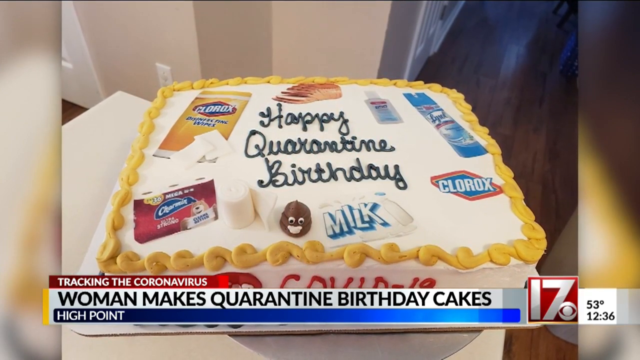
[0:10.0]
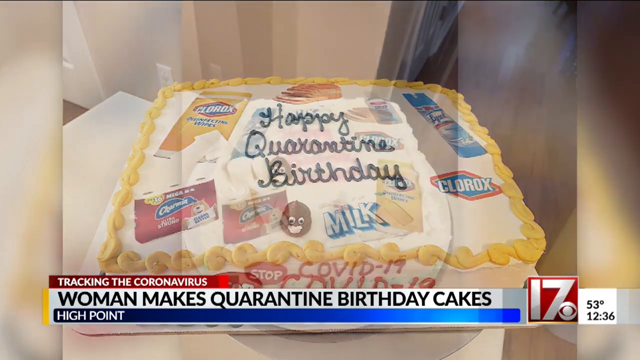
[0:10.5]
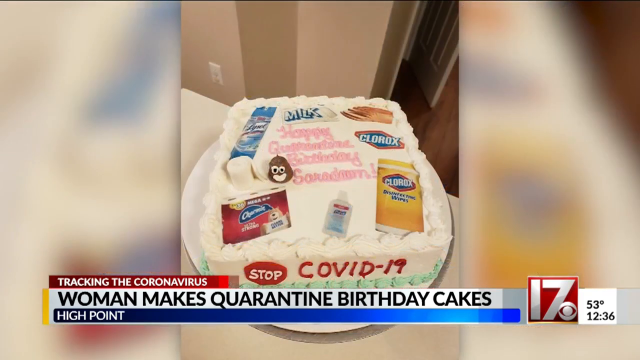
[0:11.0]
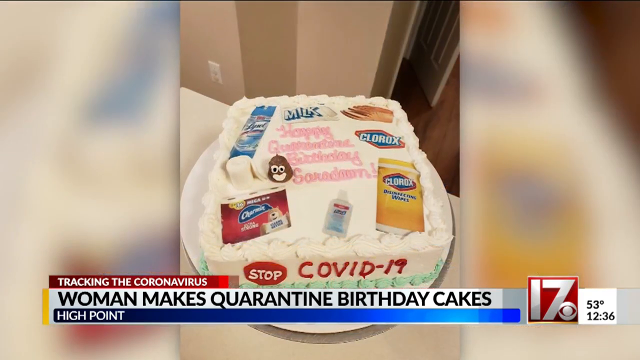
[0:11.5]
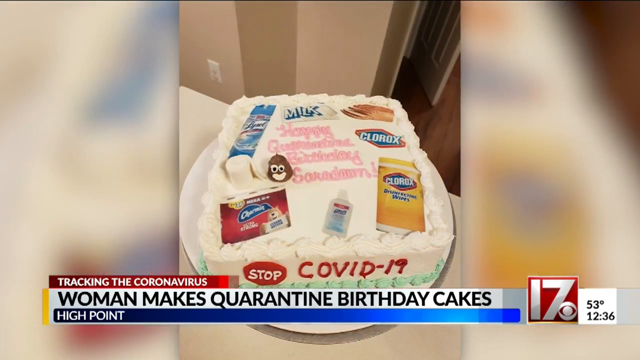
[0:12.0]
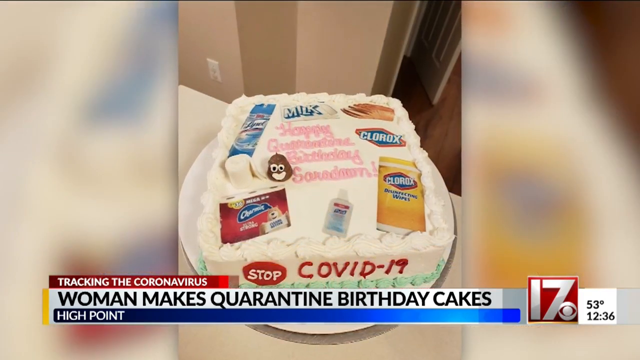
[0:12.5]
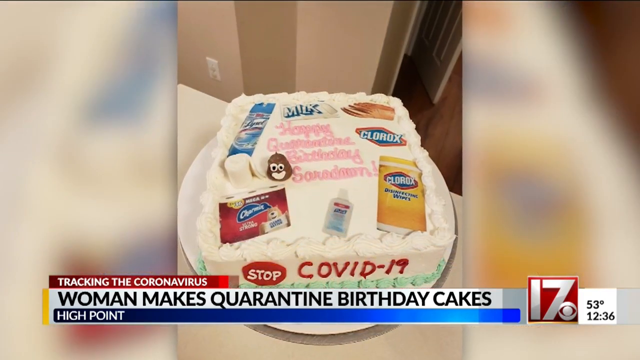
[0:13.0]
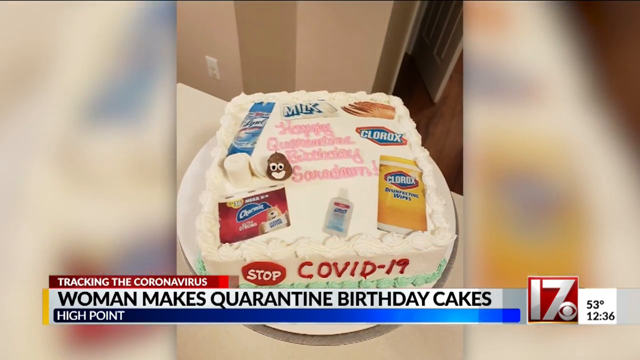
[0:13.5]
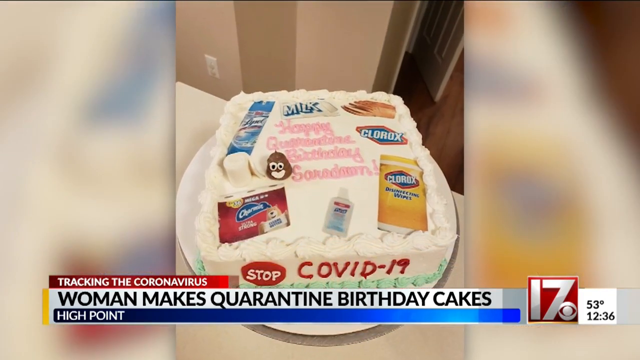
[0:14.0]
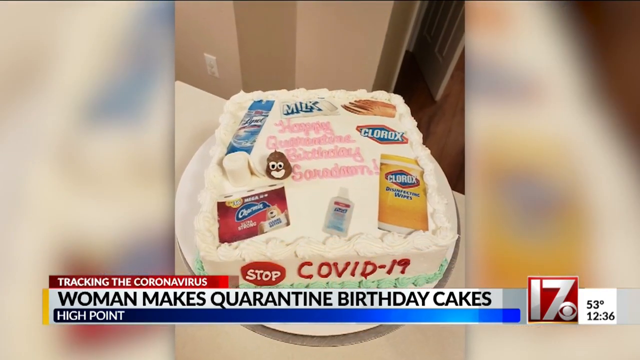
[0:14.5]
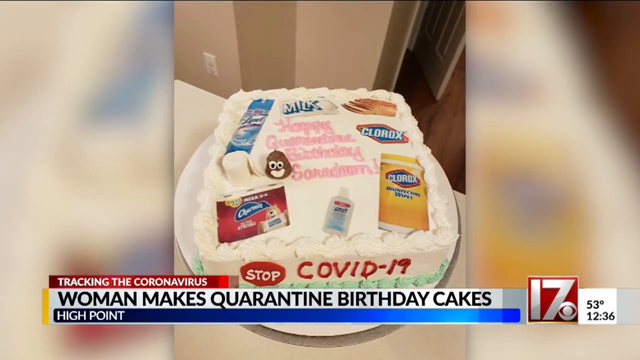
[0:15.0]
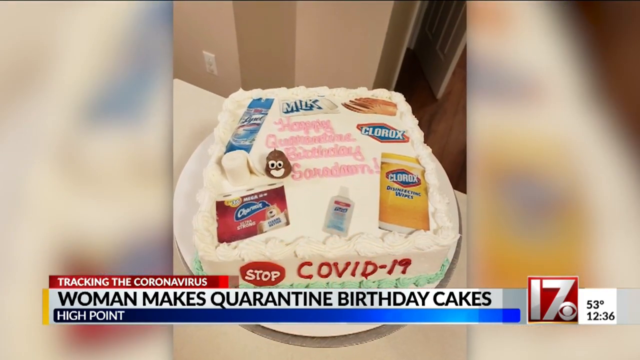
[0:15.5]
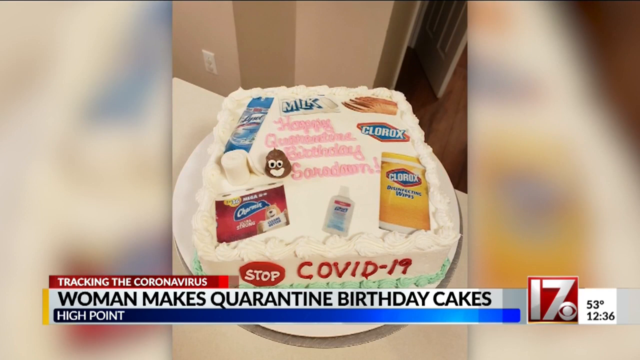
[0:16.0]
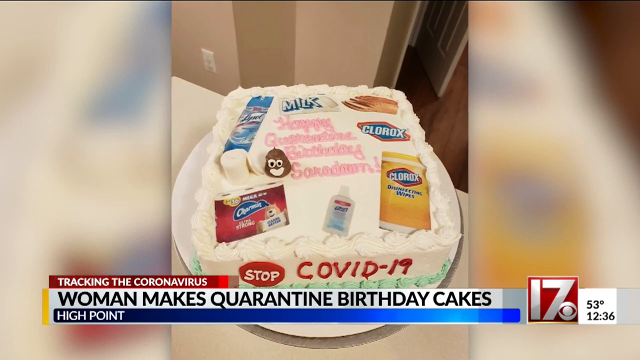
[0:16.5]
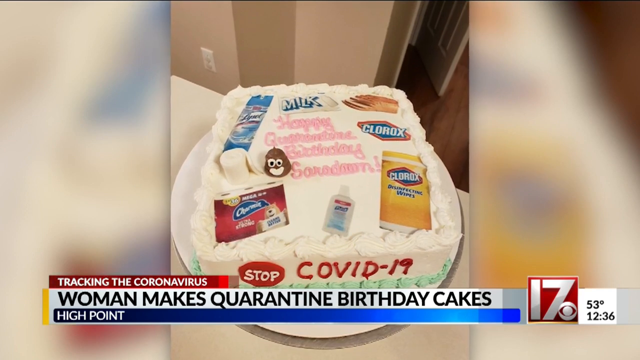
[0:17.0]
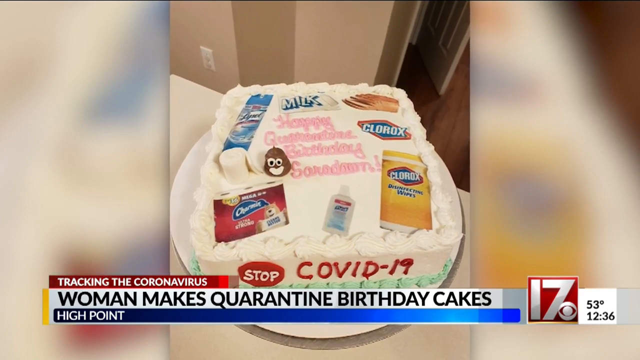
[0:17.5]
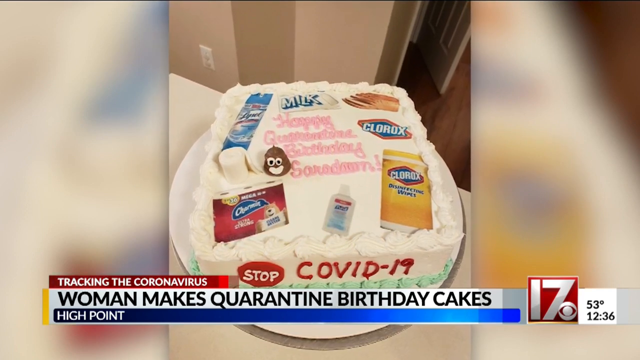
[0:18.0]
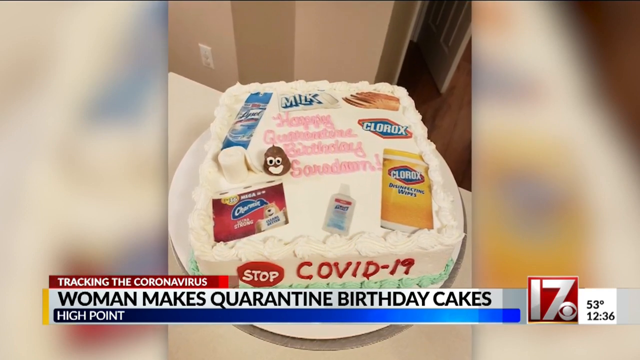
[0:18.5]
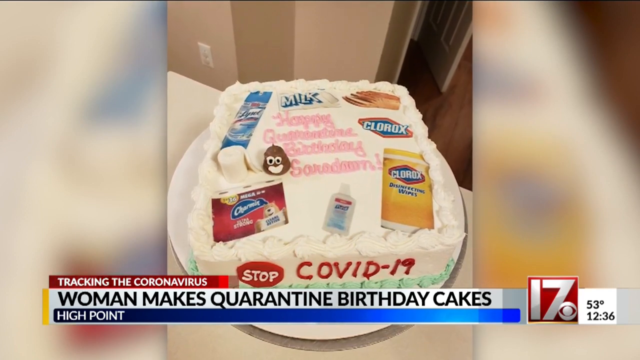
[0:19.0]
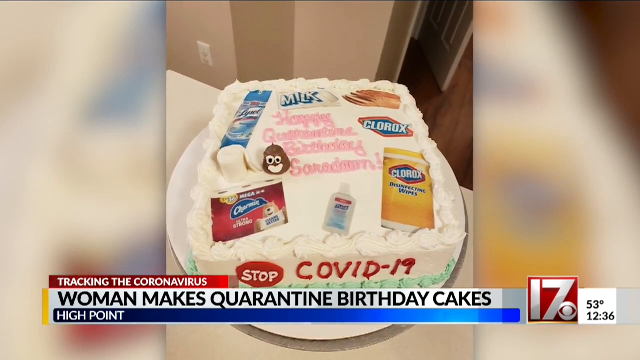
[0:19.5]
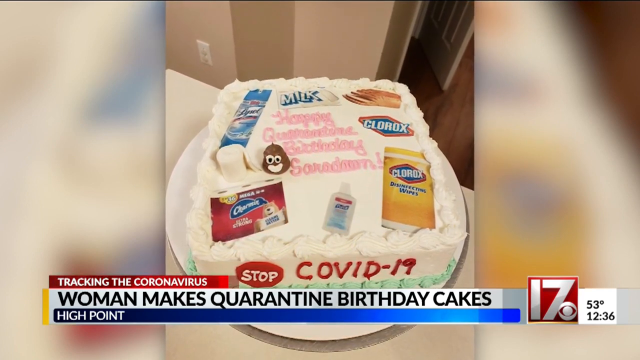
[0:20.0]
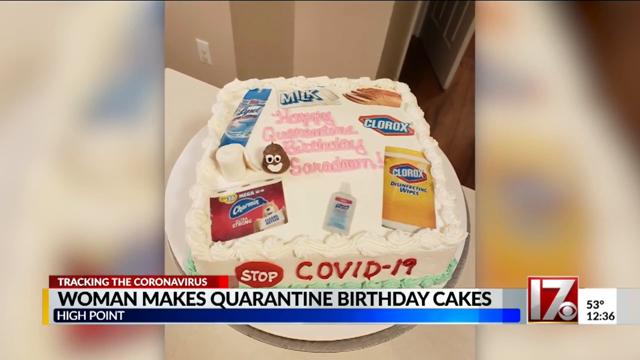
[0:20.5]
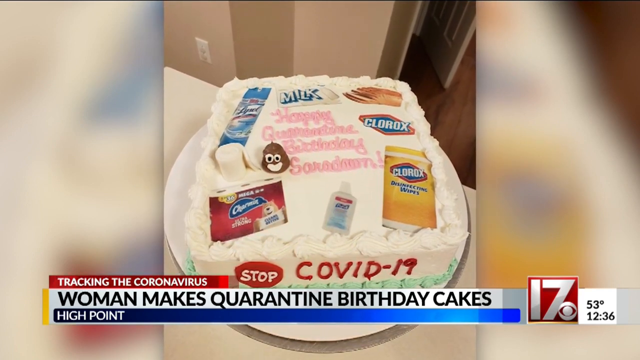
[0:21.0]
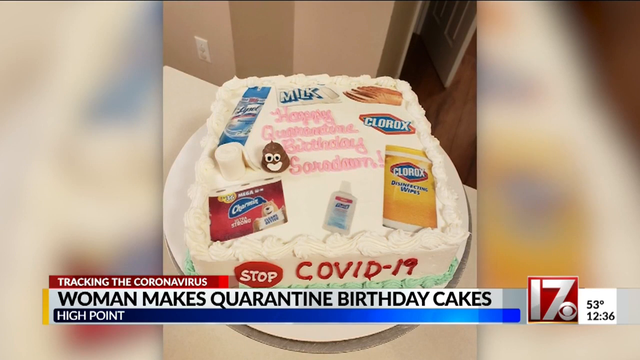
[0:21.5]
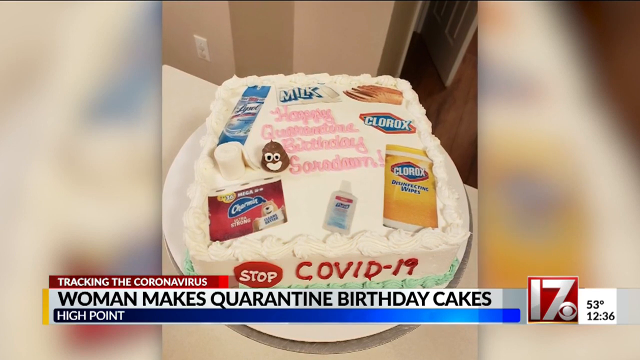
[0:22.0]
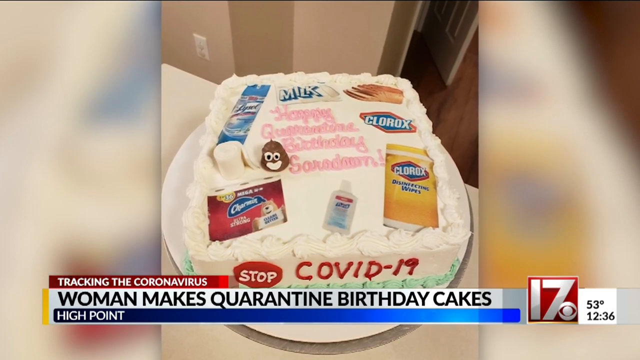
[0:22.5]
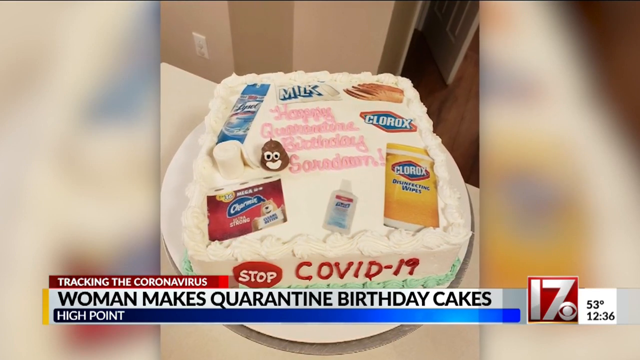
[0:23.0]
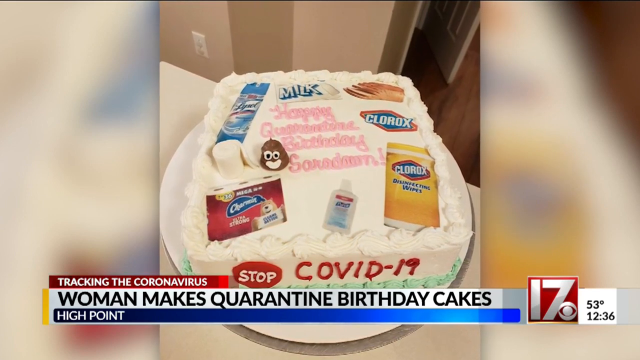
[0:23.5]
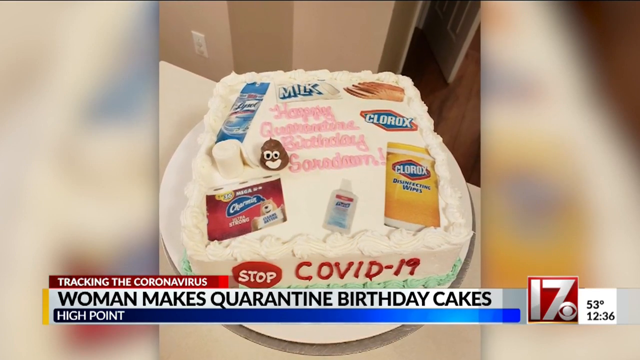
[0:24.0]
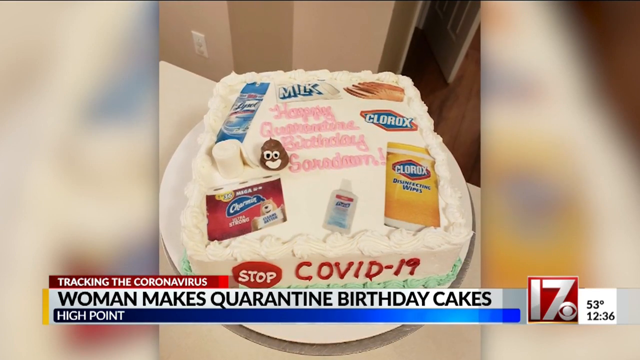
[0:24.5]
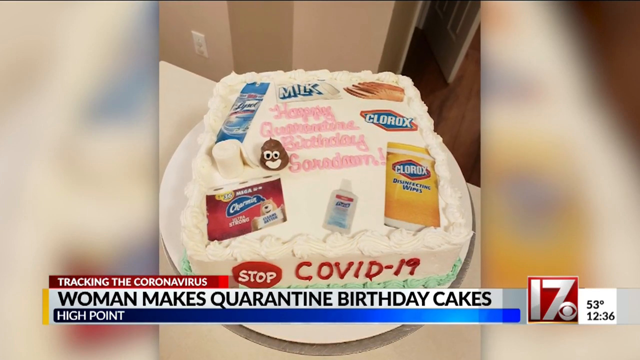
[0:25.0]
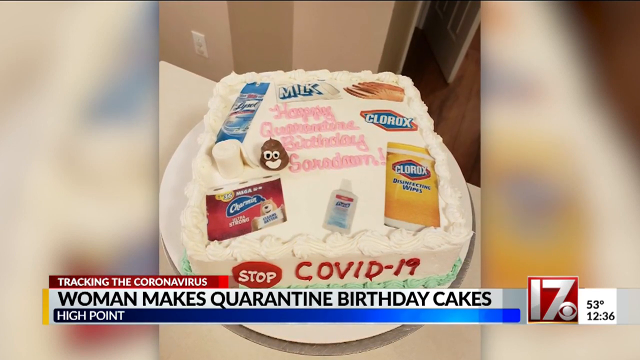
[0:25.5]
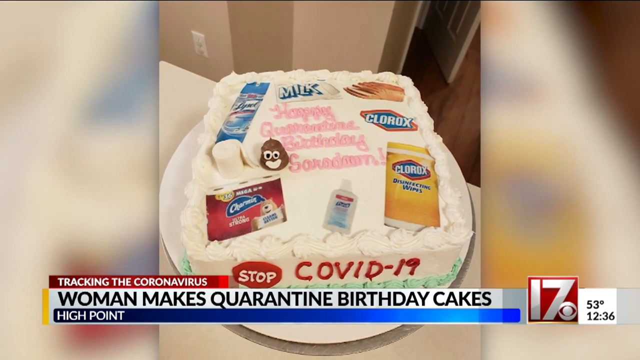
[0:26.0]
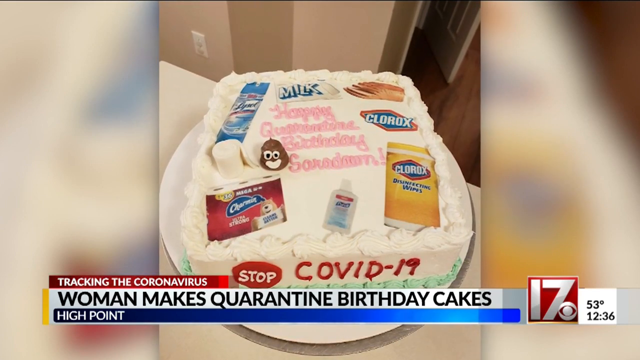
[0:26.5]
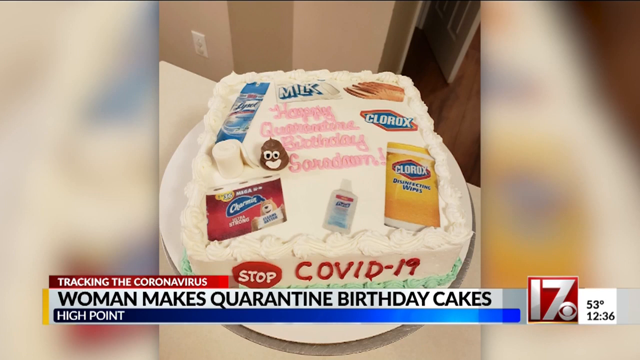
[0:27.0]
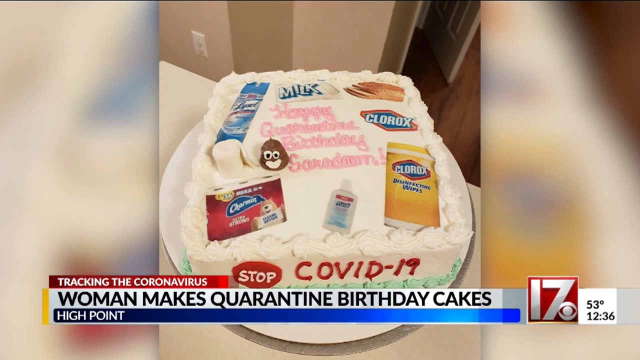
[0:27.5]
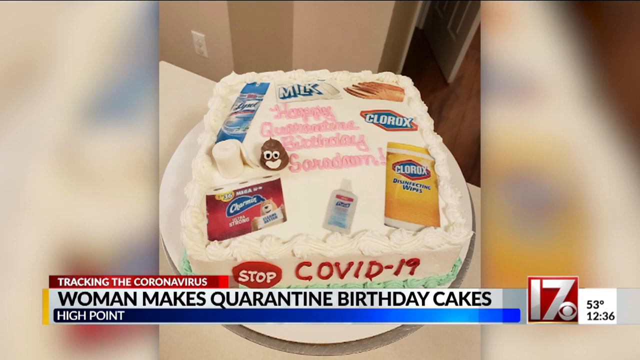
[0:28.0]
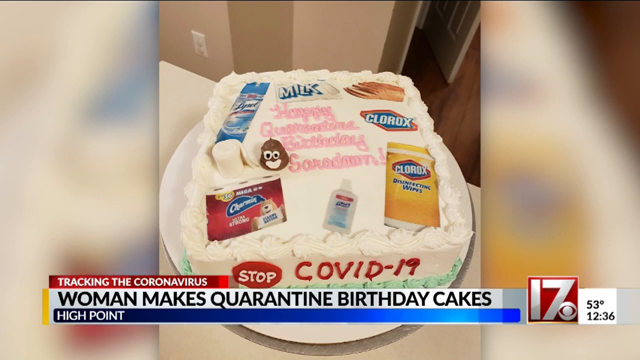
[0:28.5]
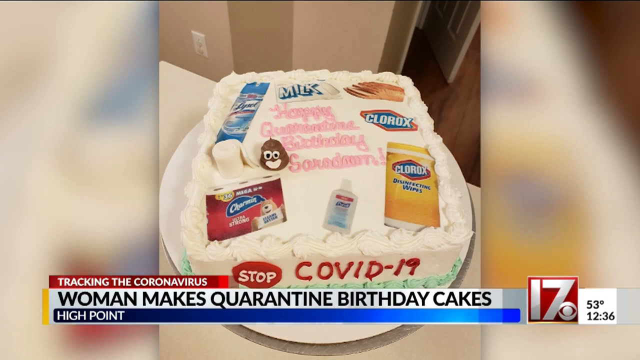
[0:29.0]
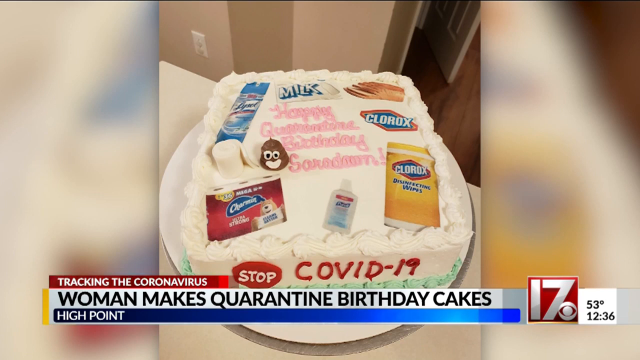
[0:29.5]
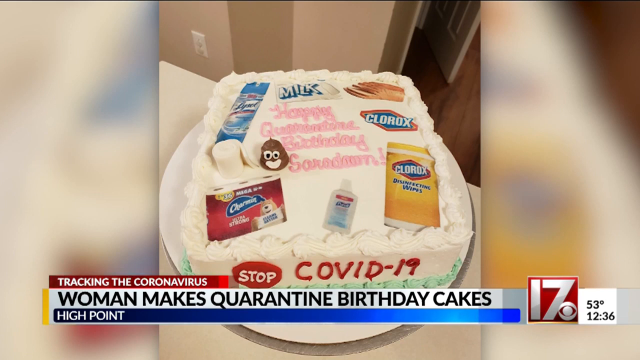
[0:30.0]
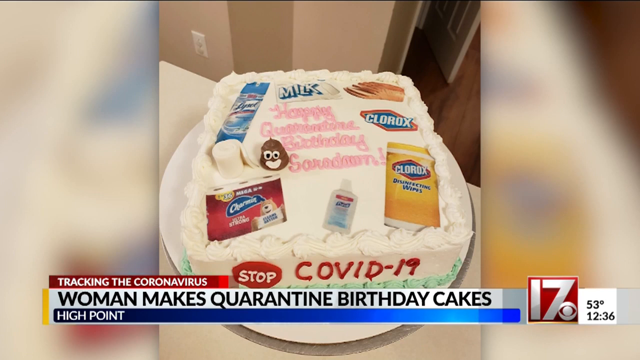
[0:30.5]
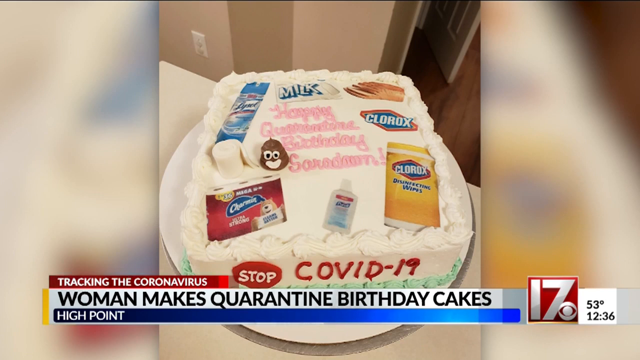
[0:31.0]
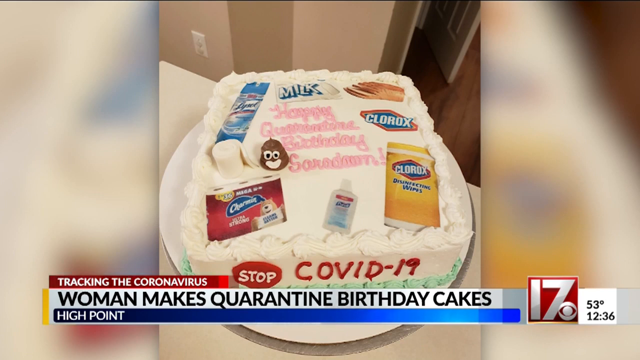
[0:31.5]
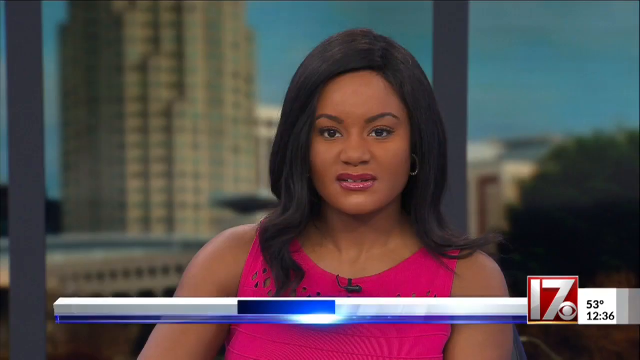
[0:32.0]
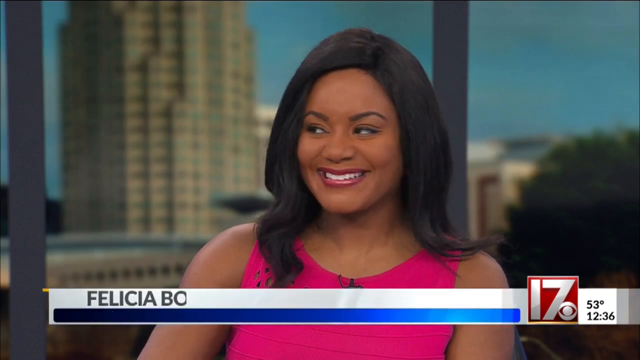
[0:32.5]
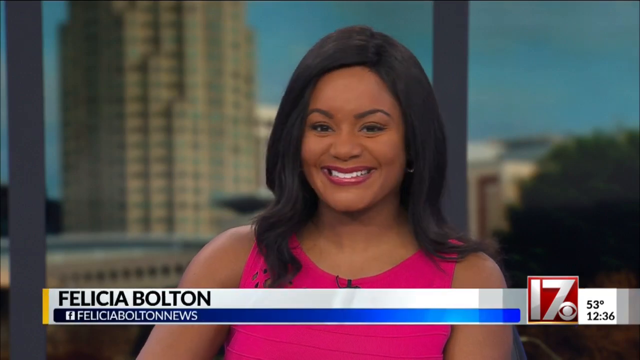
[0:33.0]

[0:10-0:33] A third cake appears, this one more 3D. On it is what looks like possibly a printout of the Lysol spray, and something like a poop emoji facing up. There is also what seems to be small toilet paper, apparently a decoration representing toilet paper. The cake says "happy quarantine birthday Sarah" followed by something else, and it has the same pictures arranged in a different order. People are talking at High Point, and then the view switches to the reporter, a Black woman with shoulder-length black hair named Felicia Bolton. She is smiling, and the video ends with her smiling at the camera.